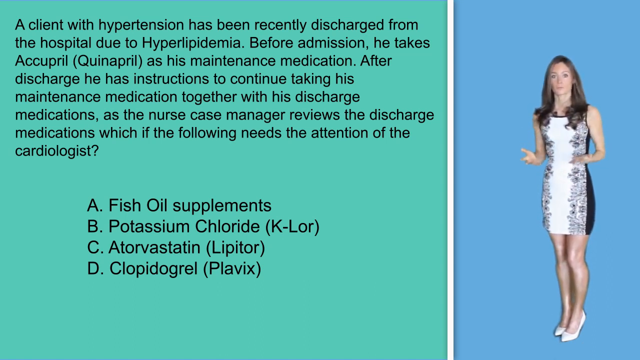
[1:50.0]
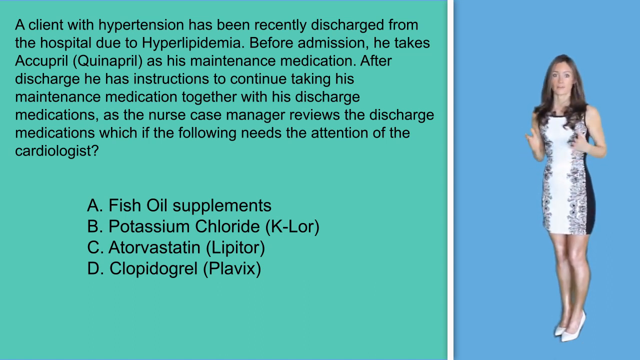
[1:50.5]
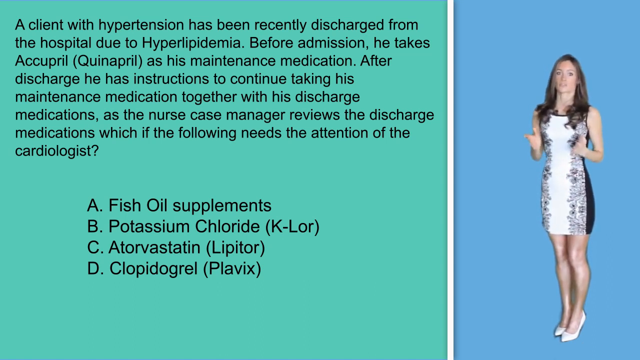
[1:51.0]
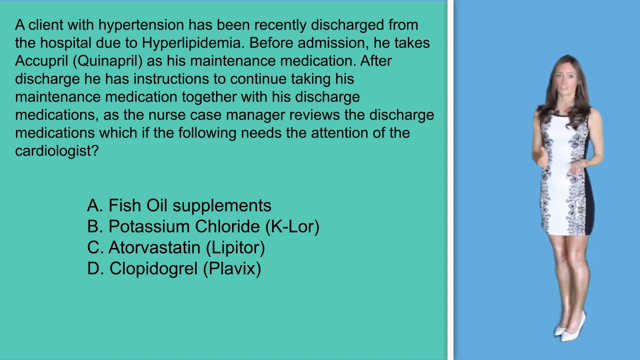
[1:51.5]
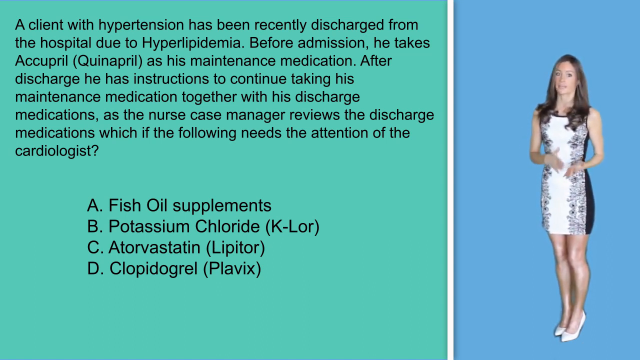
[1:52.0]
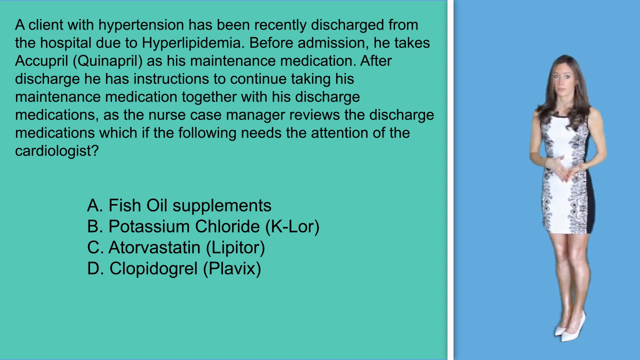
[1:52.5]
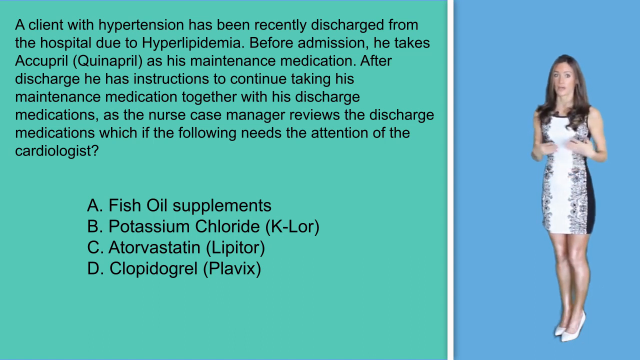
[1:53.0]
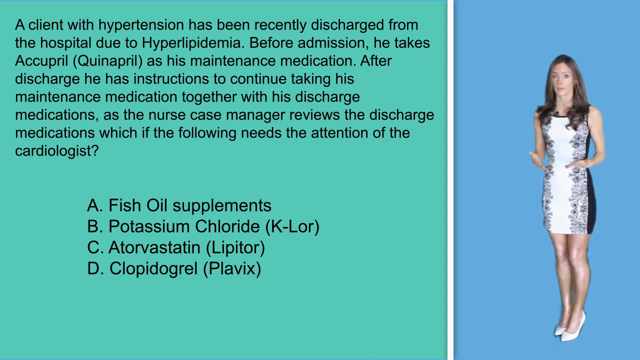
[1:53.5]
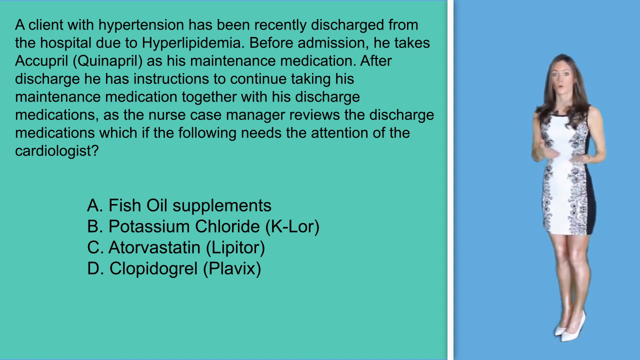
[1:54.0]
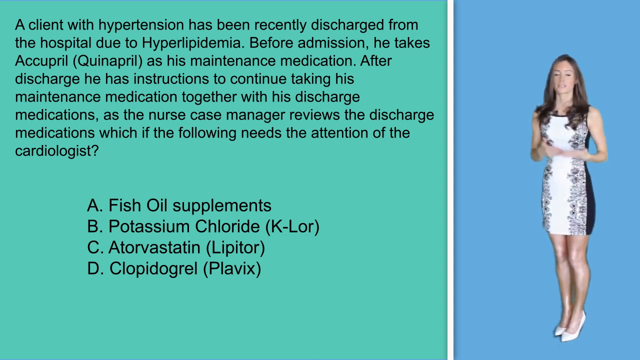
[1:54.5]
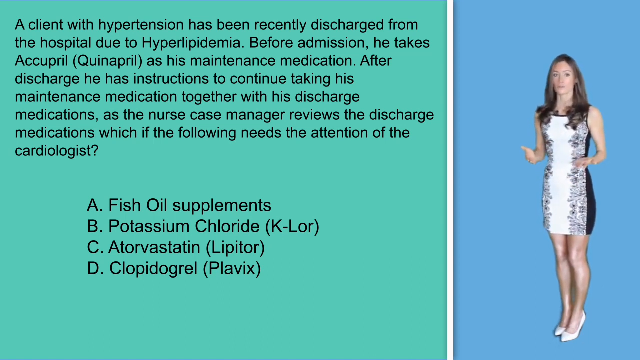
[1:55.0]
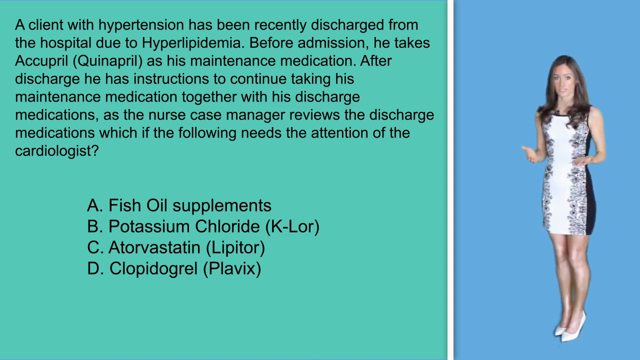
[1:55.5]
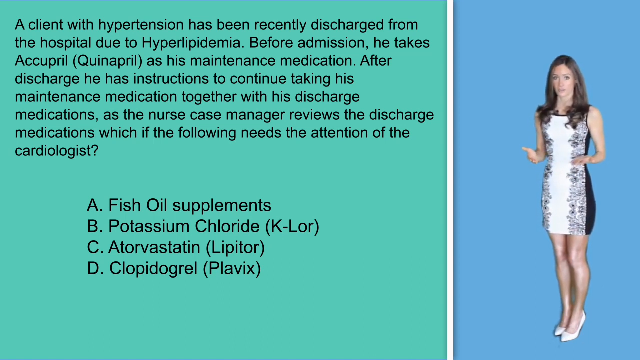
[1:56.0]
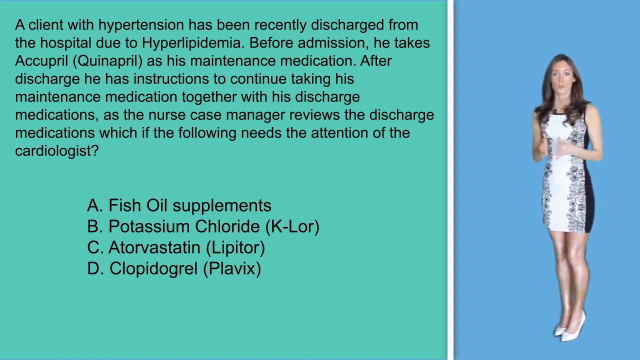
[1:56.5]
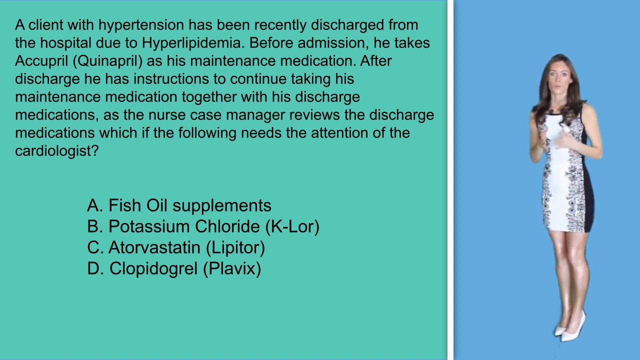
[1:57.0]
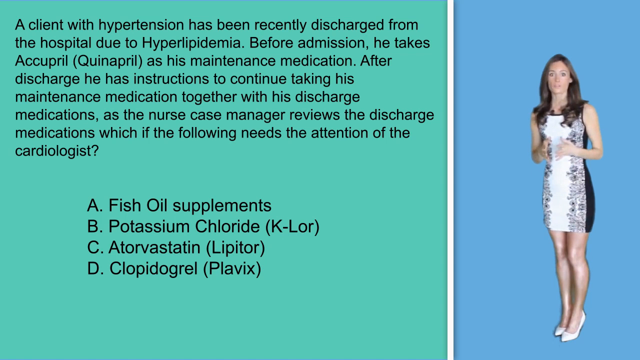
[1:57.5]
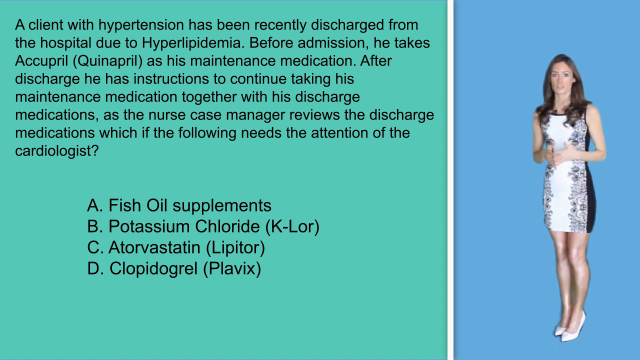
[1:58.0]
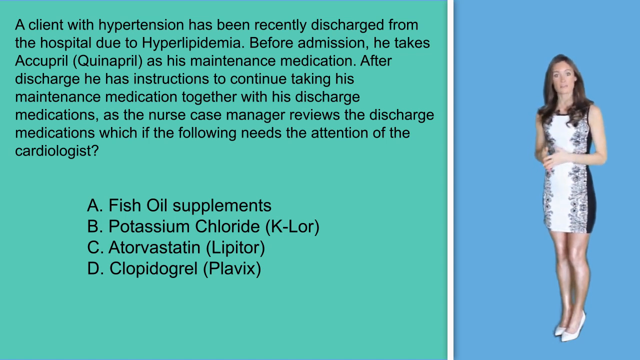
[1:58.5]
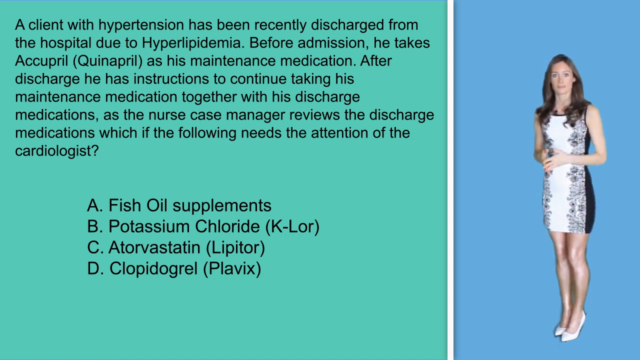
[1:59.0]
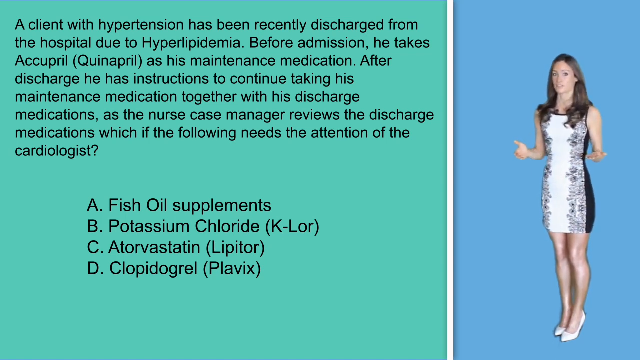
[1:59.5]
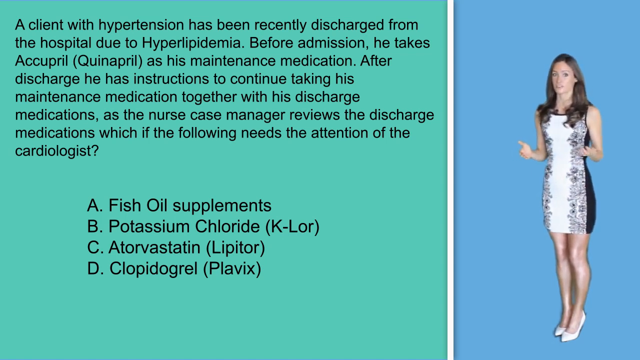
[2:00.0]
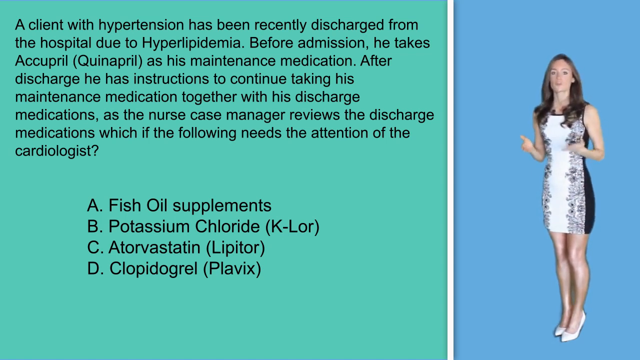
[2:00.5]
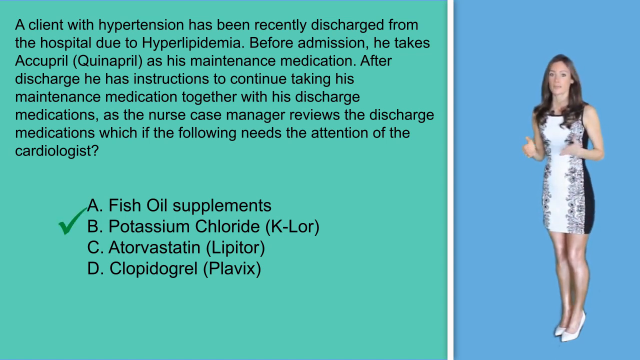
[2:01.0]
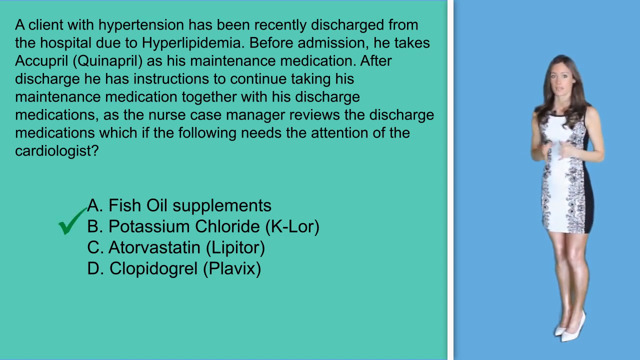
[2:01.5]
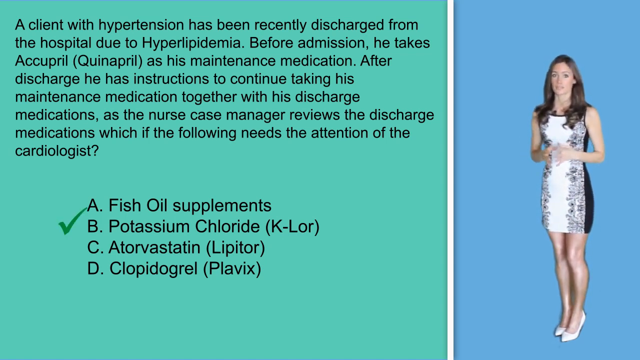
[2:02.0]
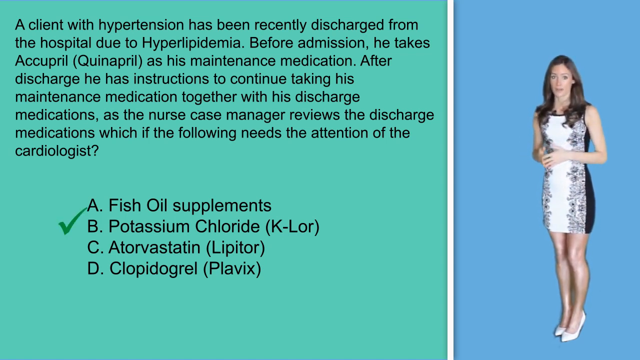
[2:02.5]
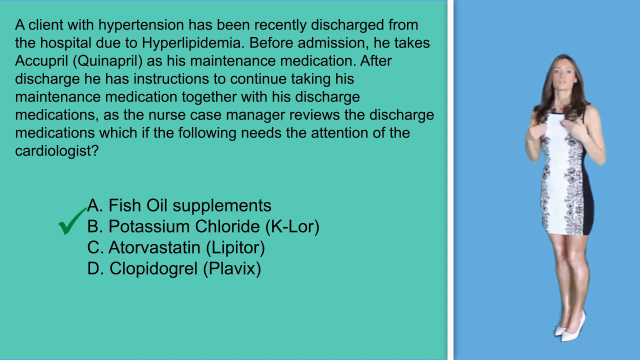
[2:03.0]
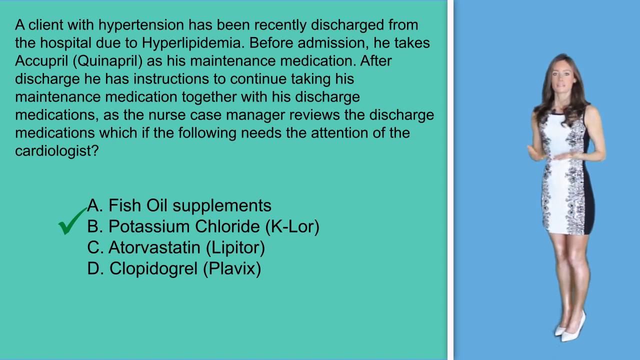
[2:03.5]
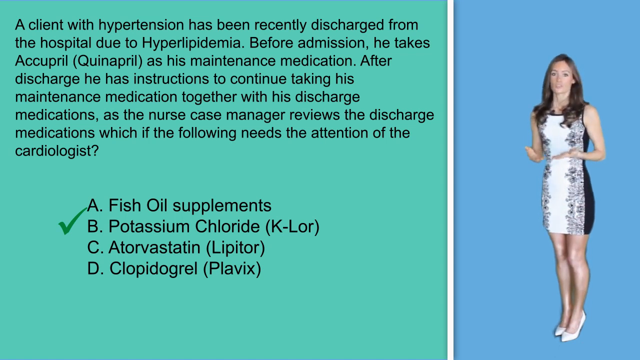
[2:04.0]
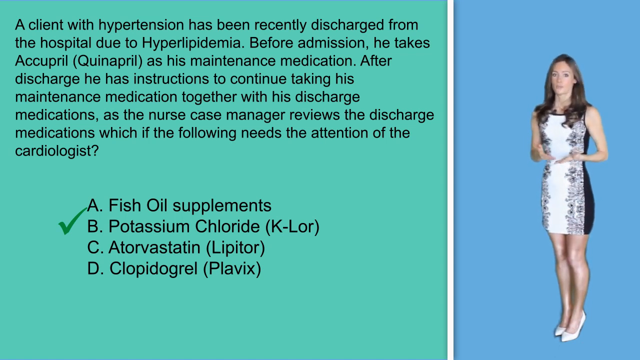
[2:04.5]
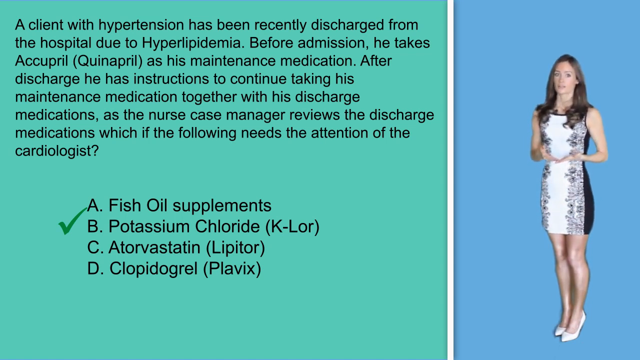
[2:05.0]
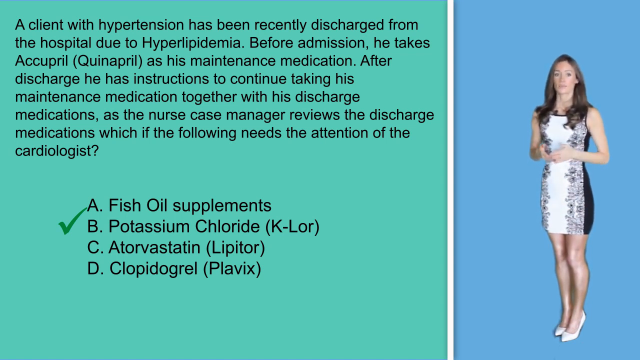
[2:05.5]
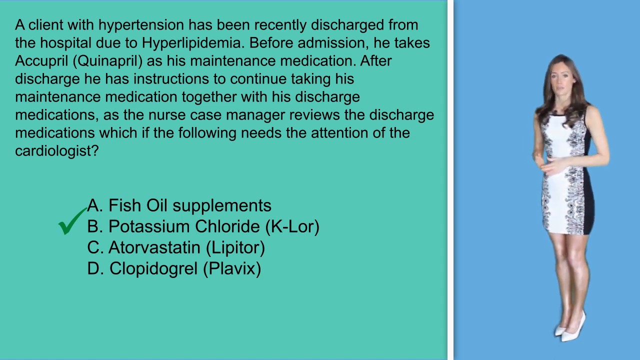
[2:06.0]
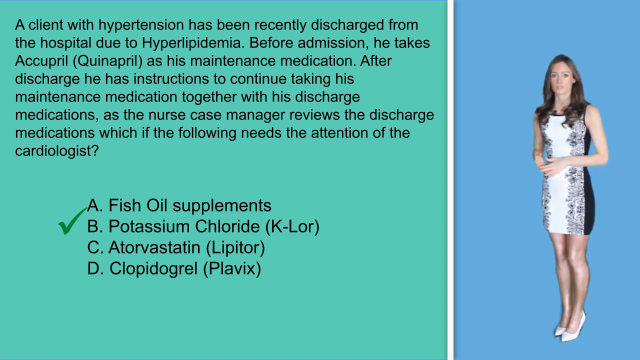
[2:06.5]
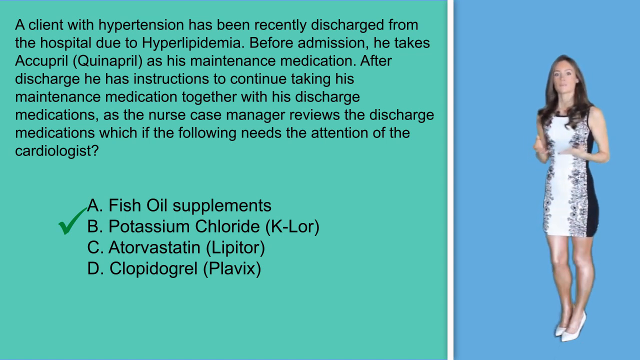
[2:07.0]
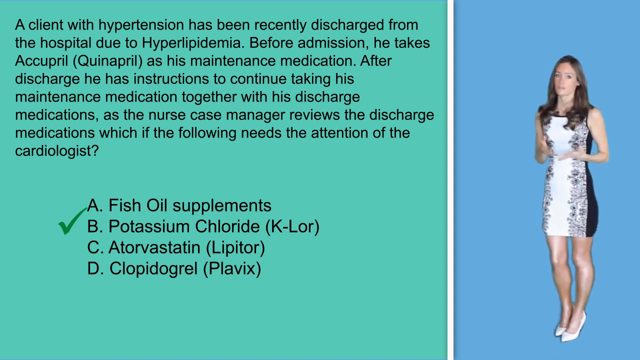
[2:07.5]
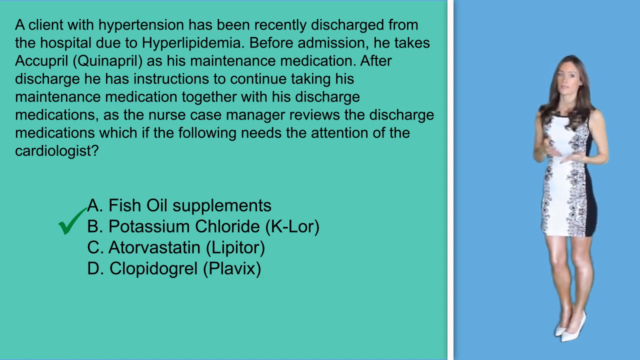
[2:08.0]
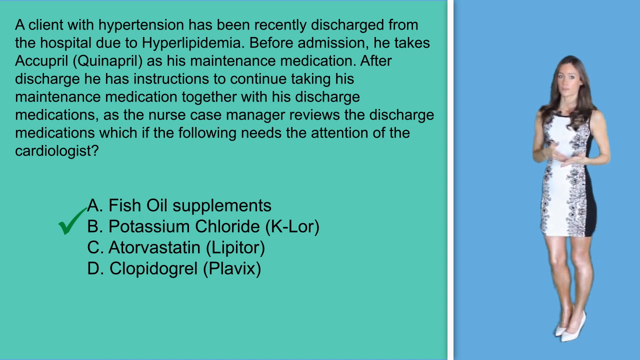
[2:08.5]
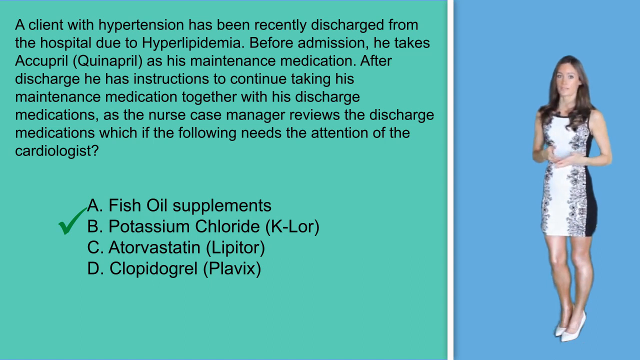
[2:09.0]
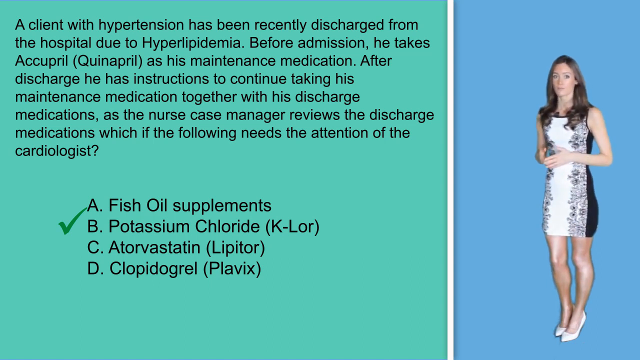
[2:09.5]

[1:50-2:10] On the right, against a light blue background, a woman in a white and black dress with floral applique, white at the center with the floral design on either side, wears white heels and has what looks like brown hair. A robin's egg blue background with black text reads: "A client with hypertension has been recently discharged from the hospital due to hyperlipidemia, before admission, he takes Quinapril as his maintenance medication. After discharge, he has instructions to continue taking his maintenance medication together with his discharge medications. As the nurse case manager reviews the discharge medications, which of the following, needs the attention of the cardiologist, A, fish oil supplements, B, potassium chloride, C, Lipitor, or D, Plavix." The woman keeps speaking and gesturing with her hands. A green check mark appears on screen next to option B, potassium chloride, and the shot holds on this while she continues to speak.